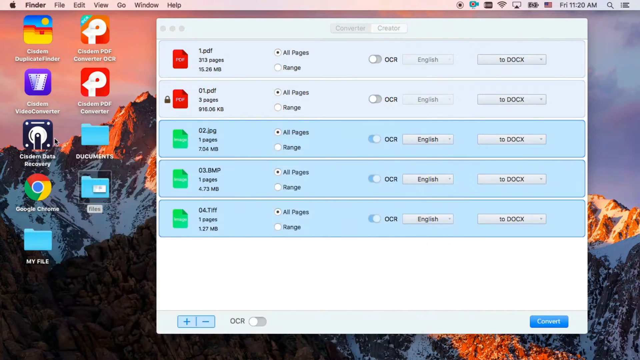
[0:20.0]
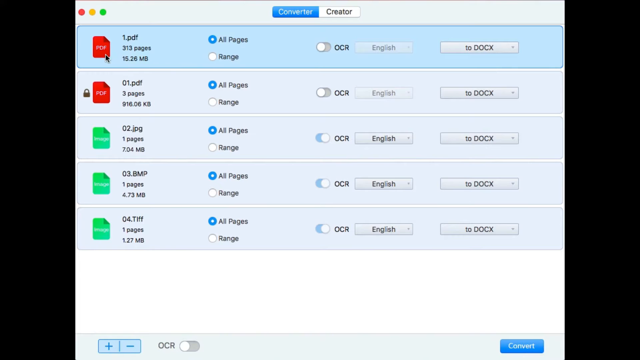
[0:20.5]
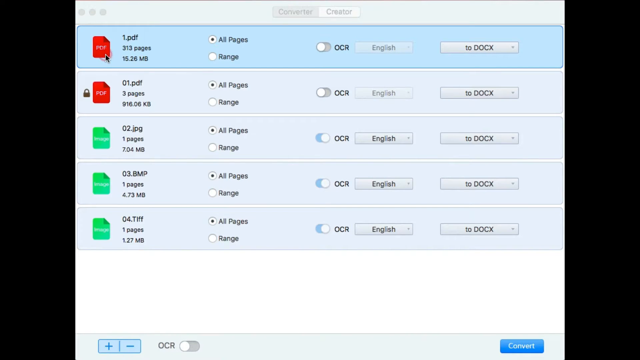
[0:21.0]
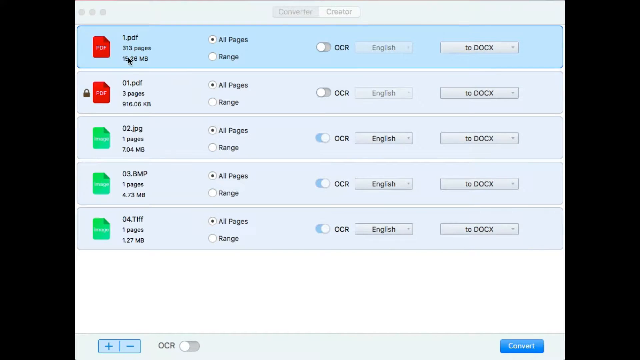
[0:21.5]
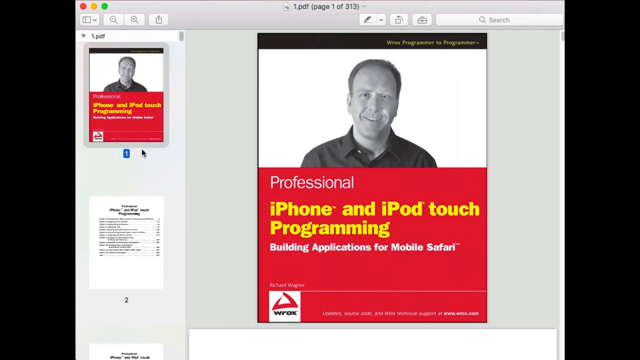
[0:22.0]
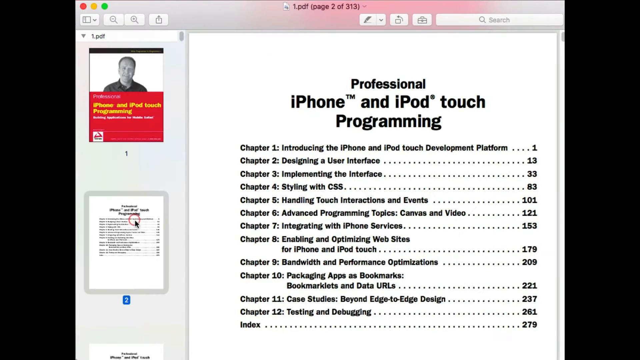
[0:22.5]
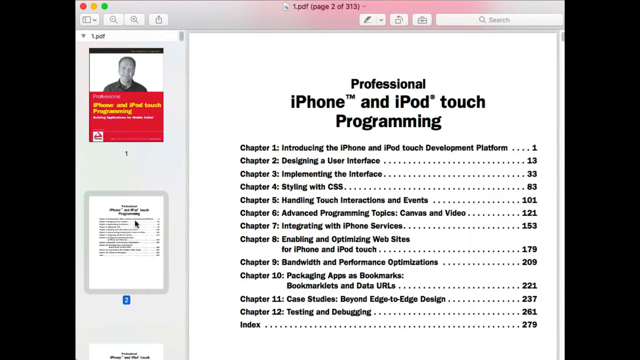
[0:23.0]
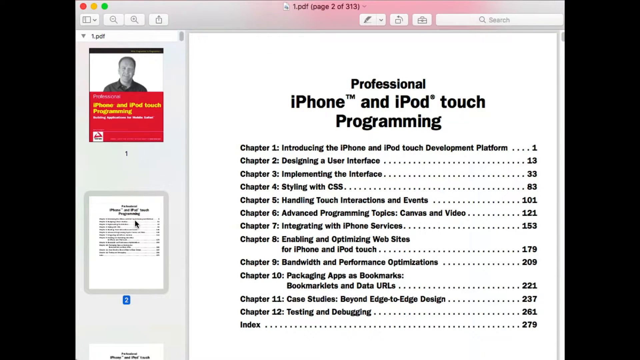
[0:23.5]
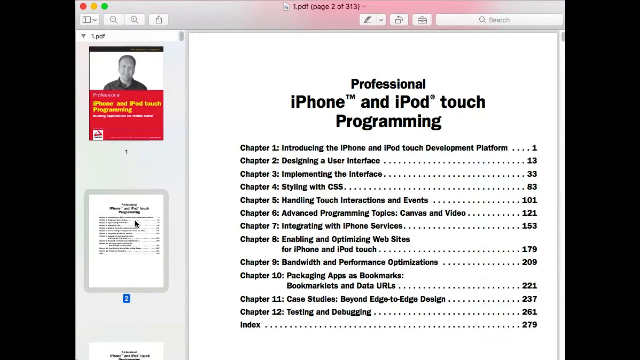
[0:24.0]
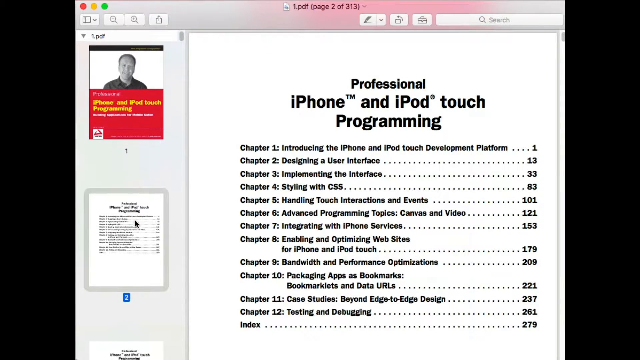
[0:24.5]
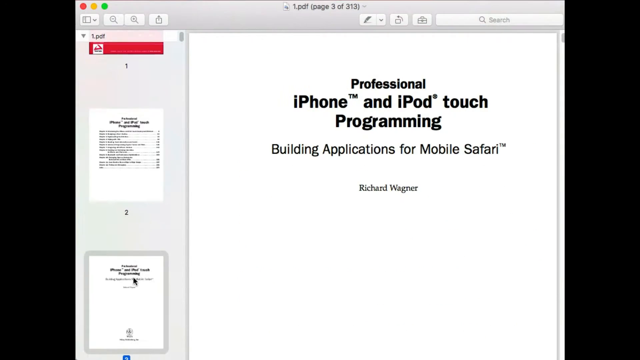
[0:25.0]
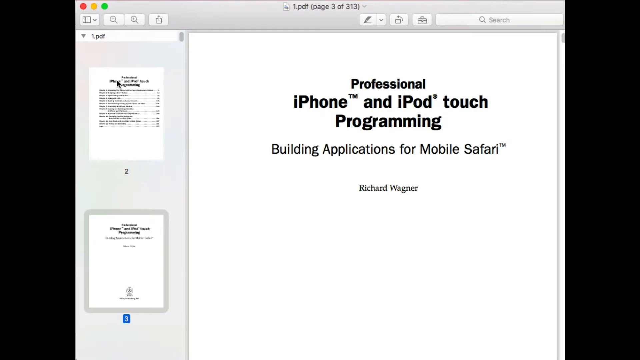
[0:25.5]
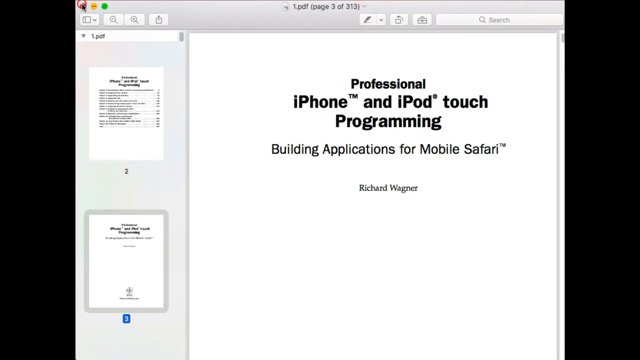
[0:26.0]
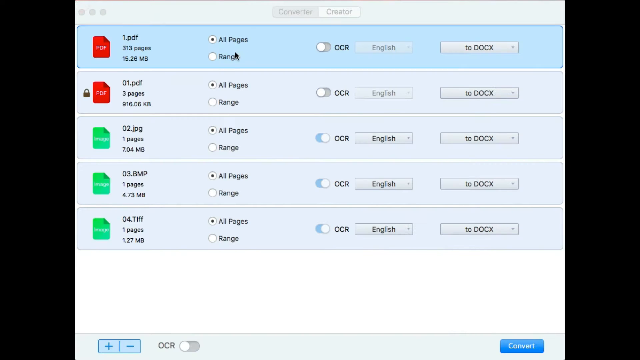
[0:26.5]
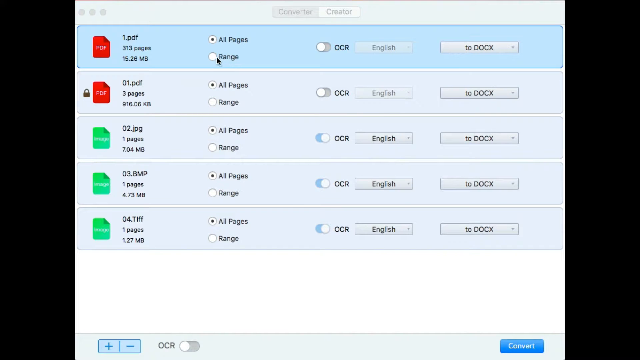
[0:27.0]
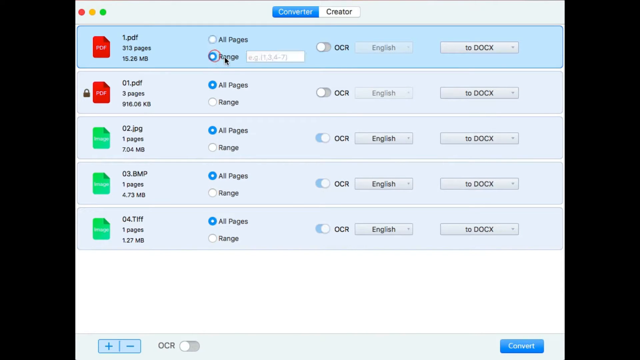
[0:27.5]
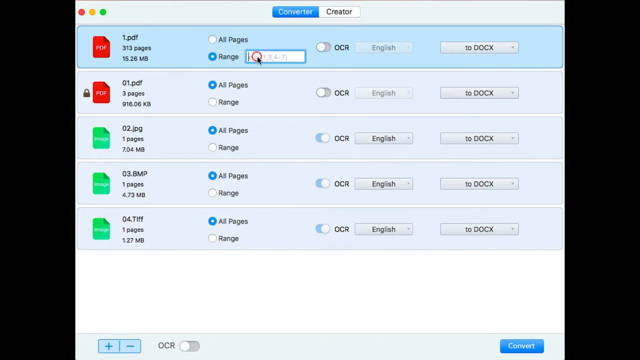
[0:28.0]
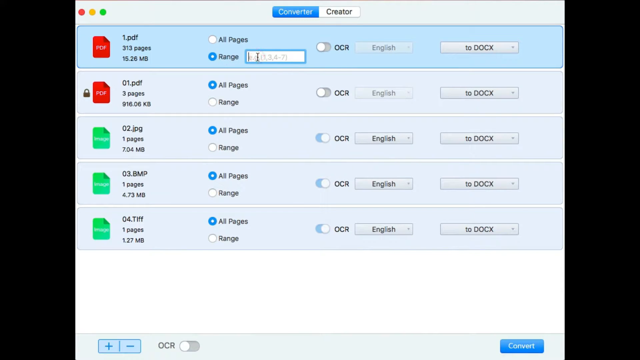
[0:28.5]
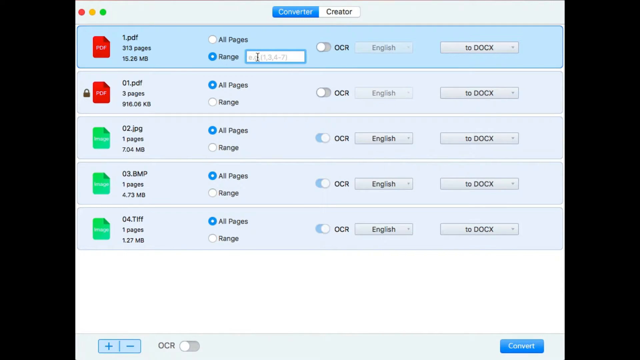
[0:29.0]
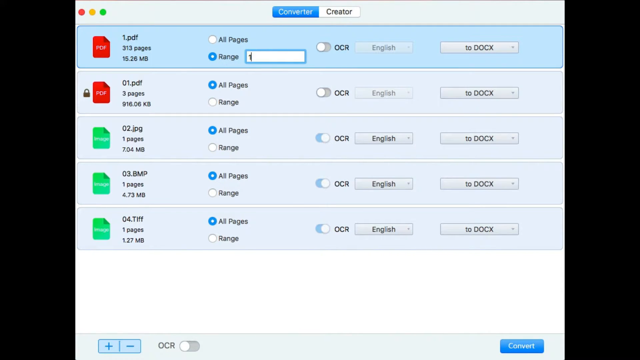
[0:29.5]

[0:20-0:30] The converter window shows the five files that were just dragged in. The man double-clicks the PDF icon of the first file, 1.pdf, which opens a preview of the PDF. He clicks onto page 2, scrolls down, and closes the preview using the X at the top left. Back on the converter screen, each row has different options. In the 1.pdf row, the far left shows the PDF icon; the next column shows the name "1.pdf," with the page count, "313 pages," right below it, and a file size of about 15 megabytes. The next column has radio buttons: "All Pages," which is the default, and "Ranges," which he clicks, bringing up a text box where he enters 1, 2 and 3. Other columns include OCR, a toggle switch; Language, a drop-down set to English; and a last column set to DOCX.